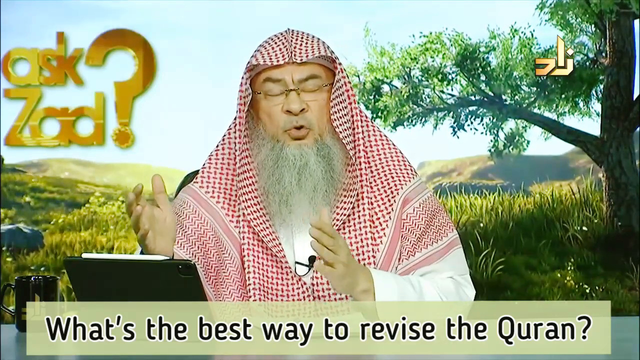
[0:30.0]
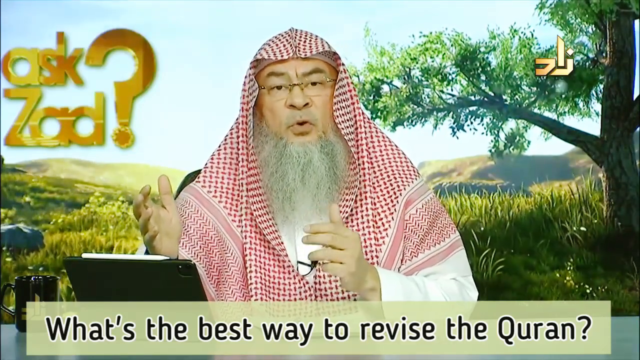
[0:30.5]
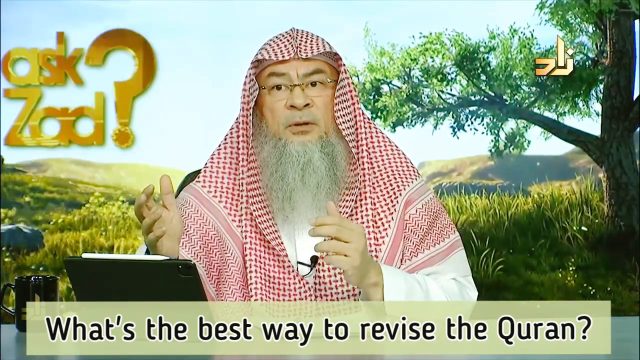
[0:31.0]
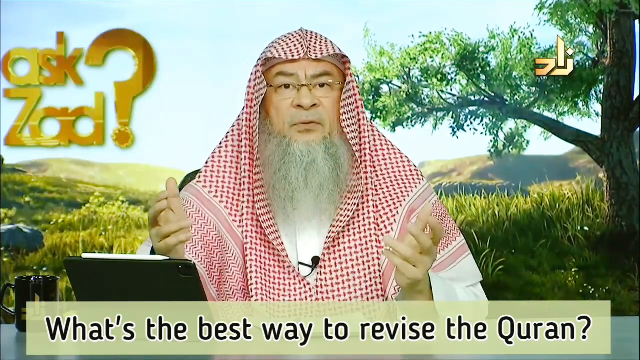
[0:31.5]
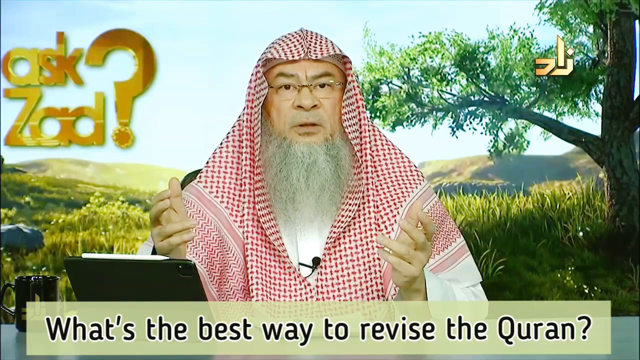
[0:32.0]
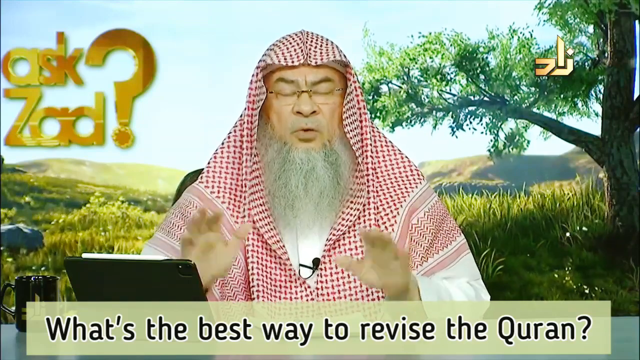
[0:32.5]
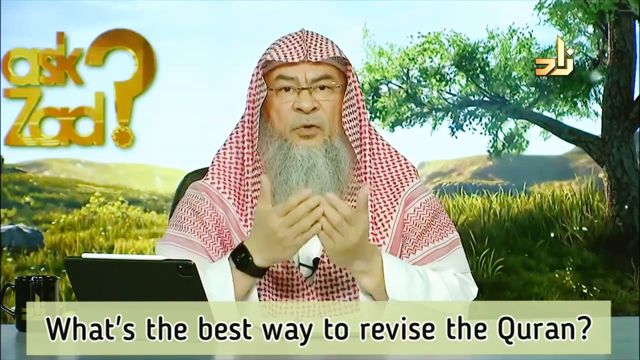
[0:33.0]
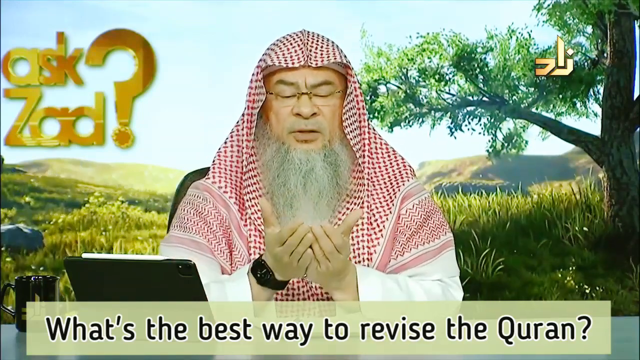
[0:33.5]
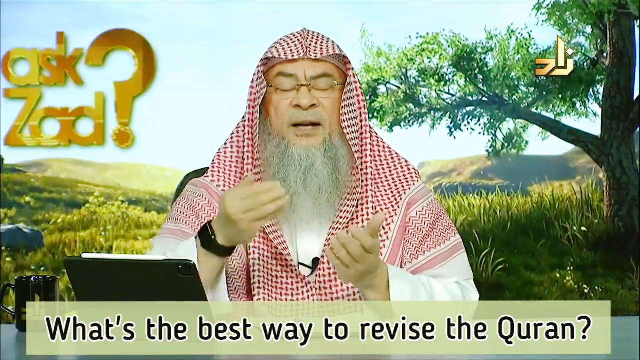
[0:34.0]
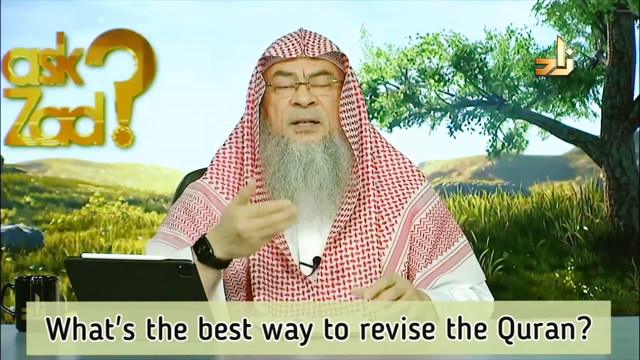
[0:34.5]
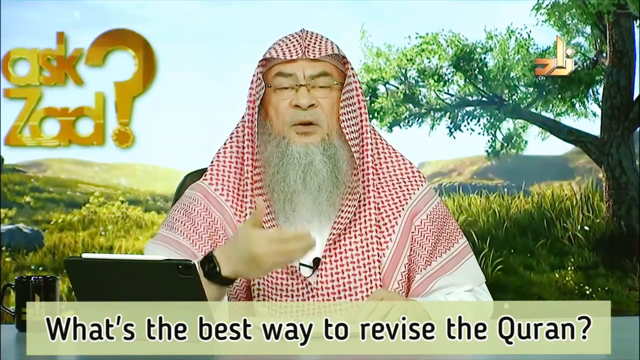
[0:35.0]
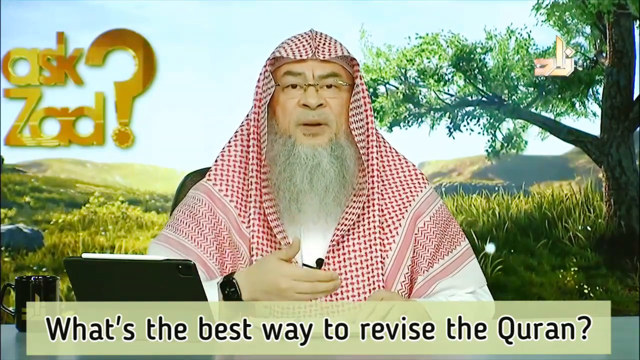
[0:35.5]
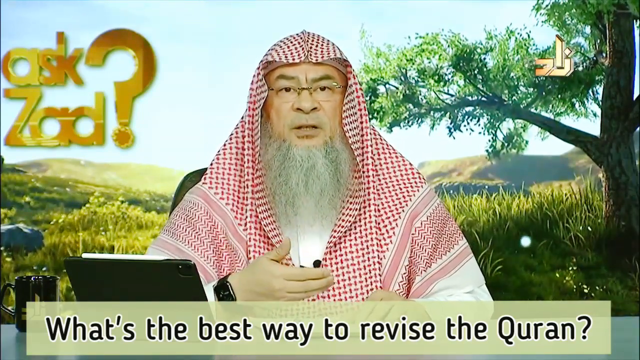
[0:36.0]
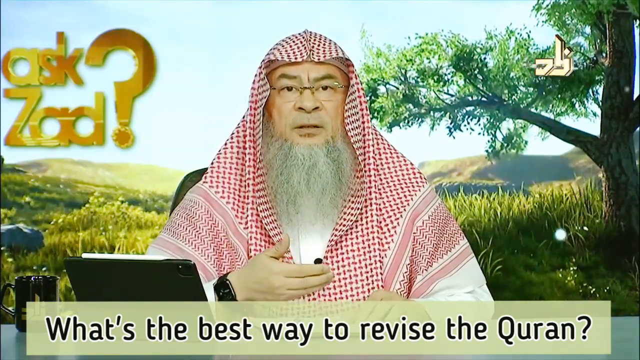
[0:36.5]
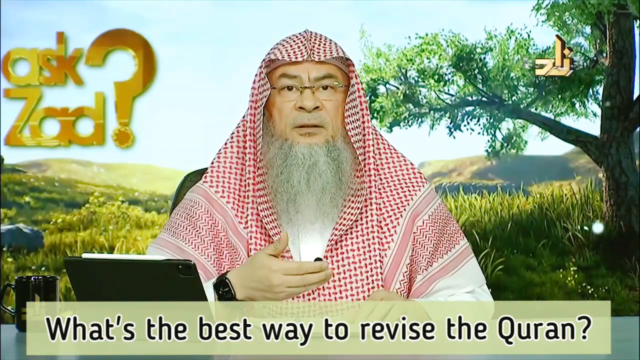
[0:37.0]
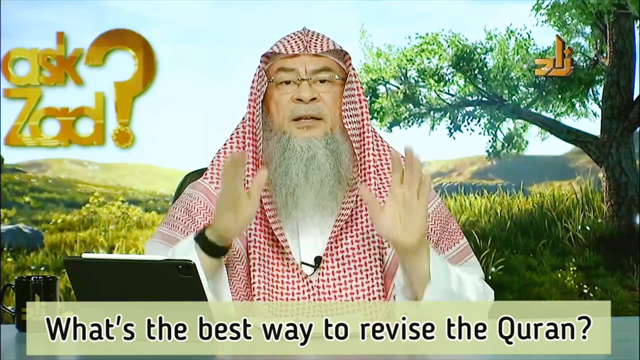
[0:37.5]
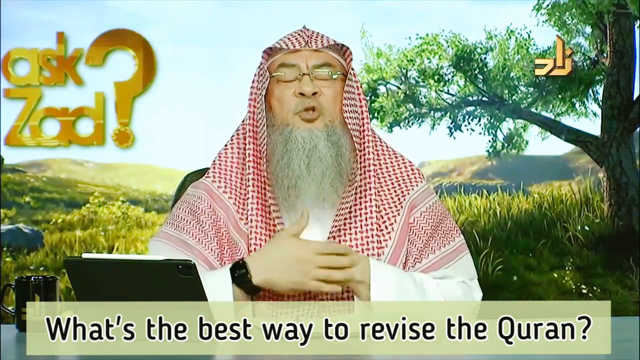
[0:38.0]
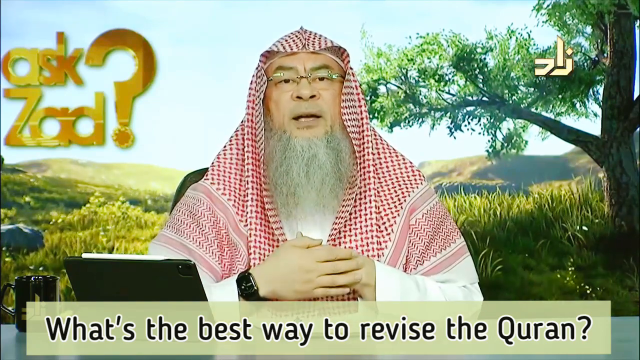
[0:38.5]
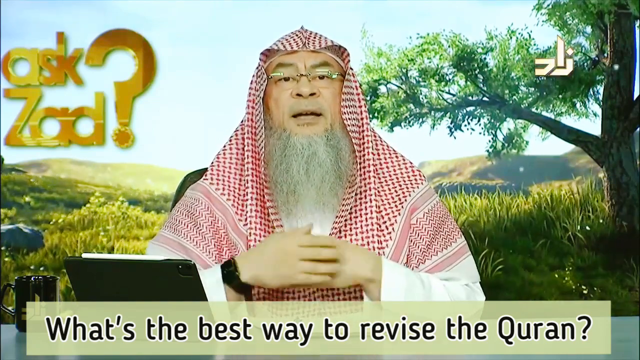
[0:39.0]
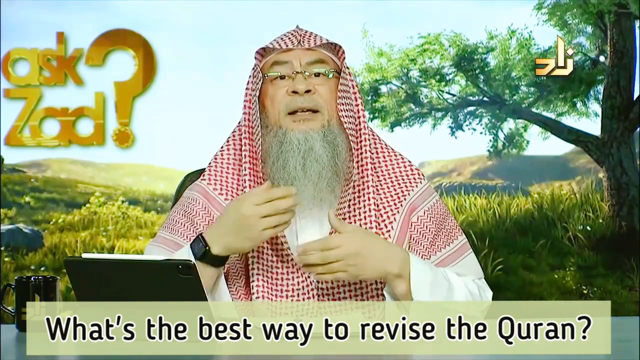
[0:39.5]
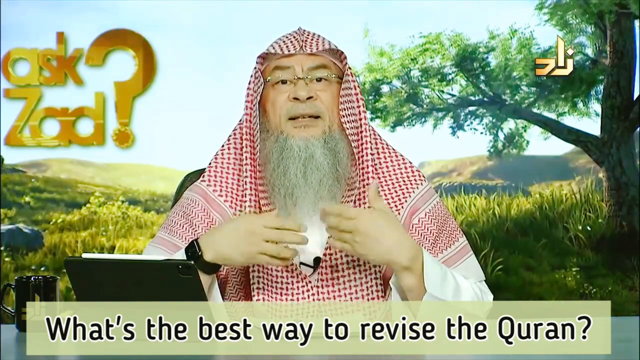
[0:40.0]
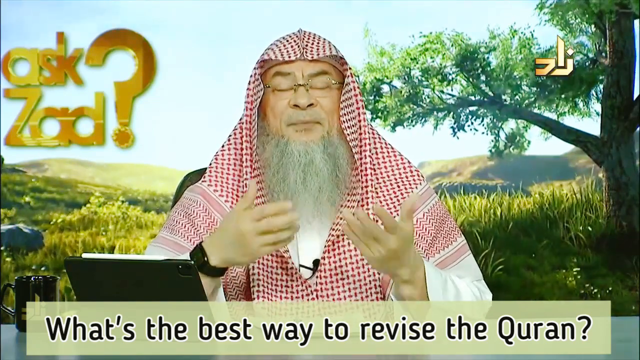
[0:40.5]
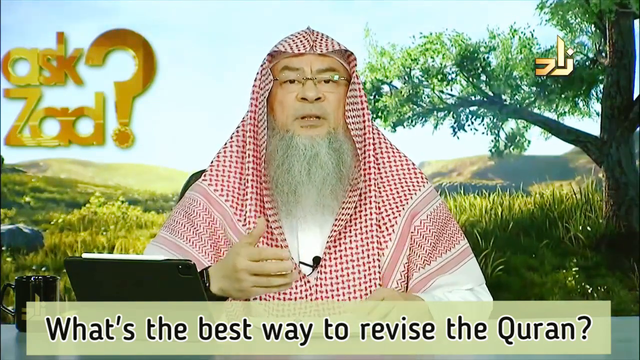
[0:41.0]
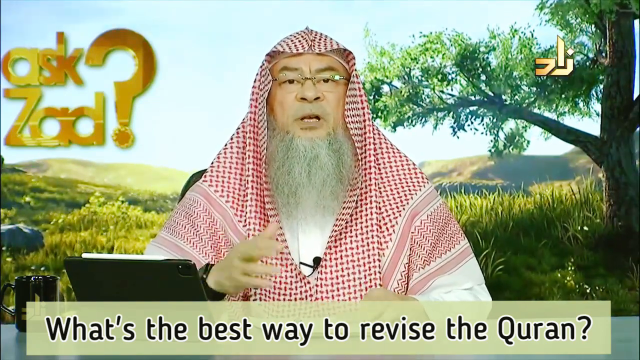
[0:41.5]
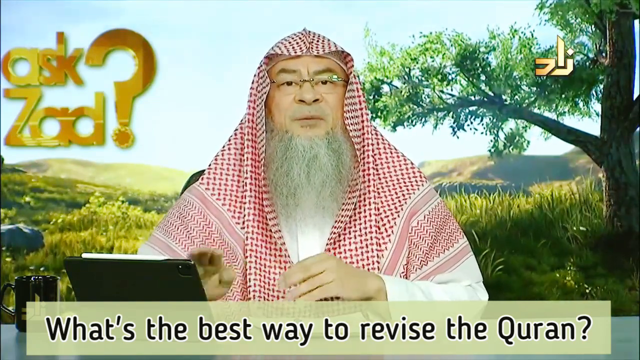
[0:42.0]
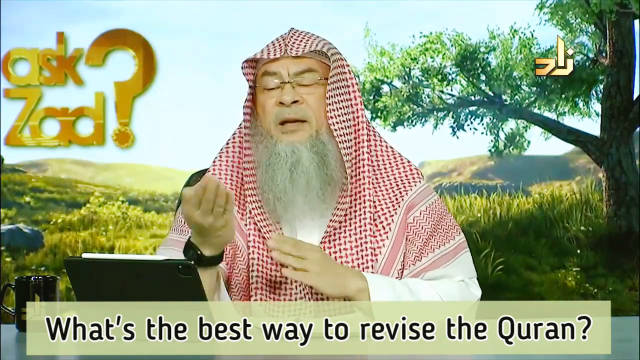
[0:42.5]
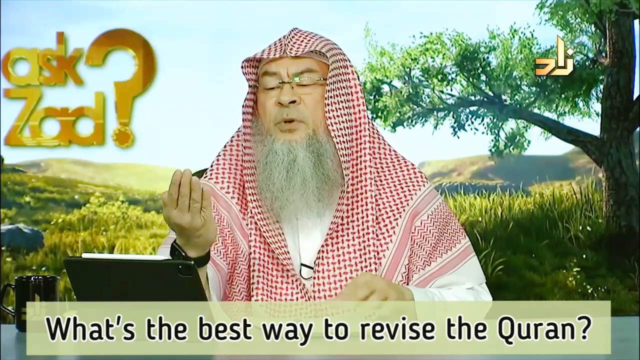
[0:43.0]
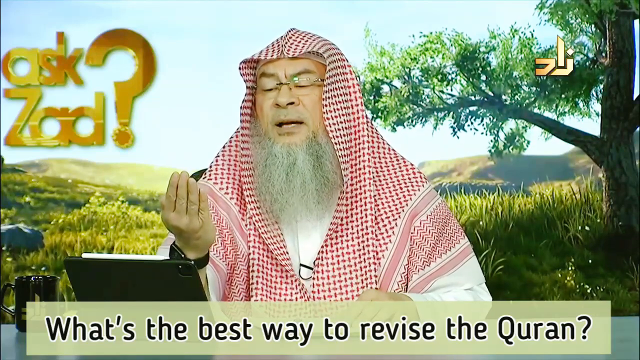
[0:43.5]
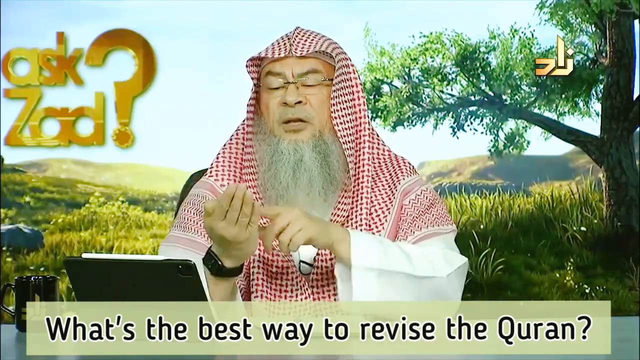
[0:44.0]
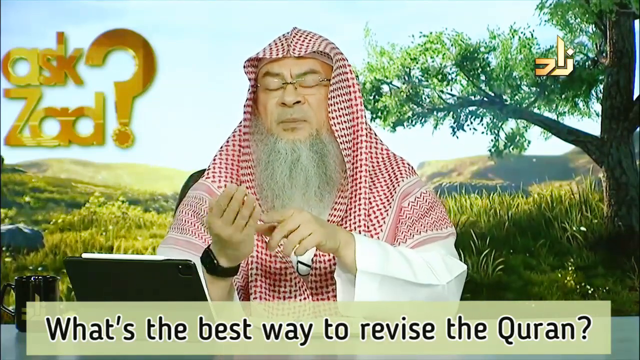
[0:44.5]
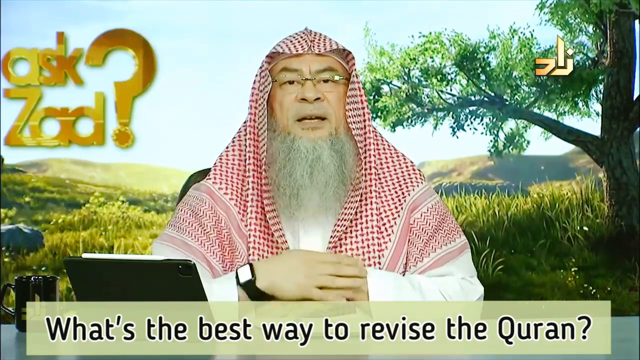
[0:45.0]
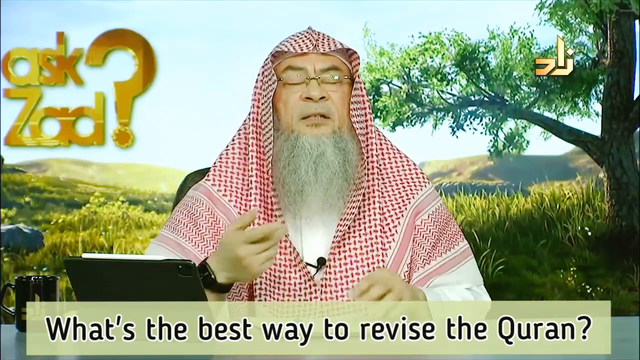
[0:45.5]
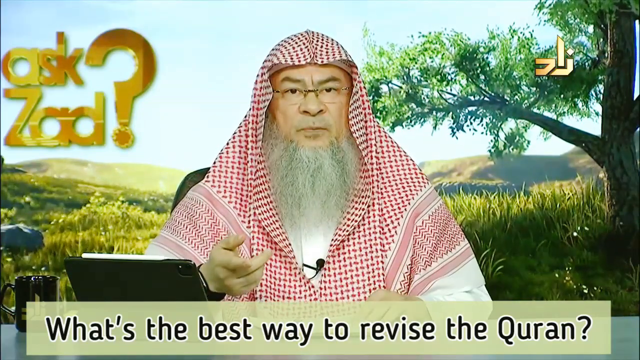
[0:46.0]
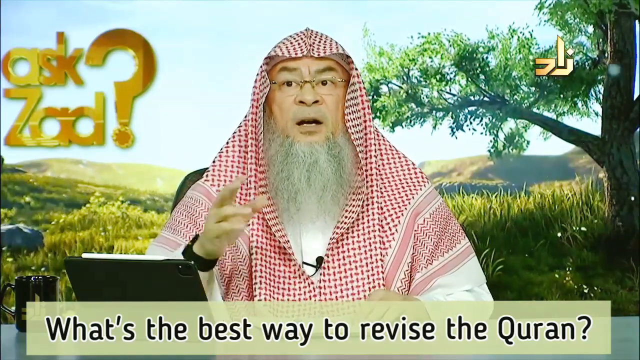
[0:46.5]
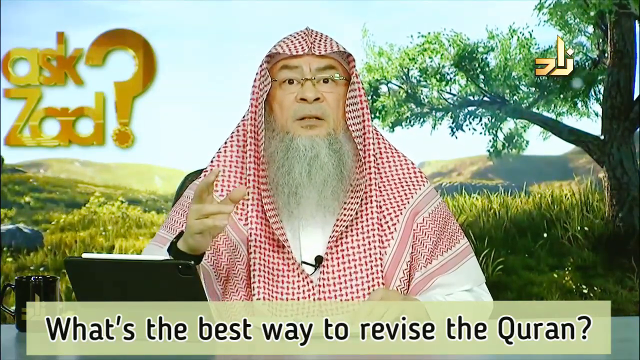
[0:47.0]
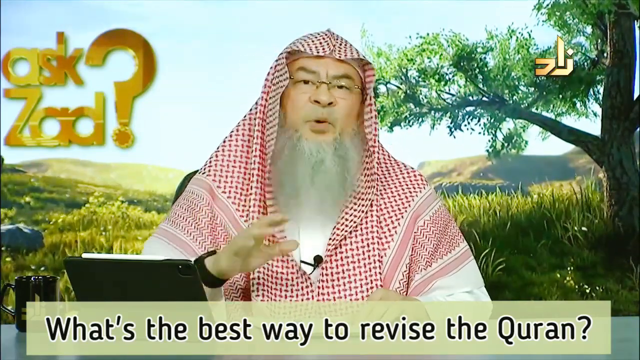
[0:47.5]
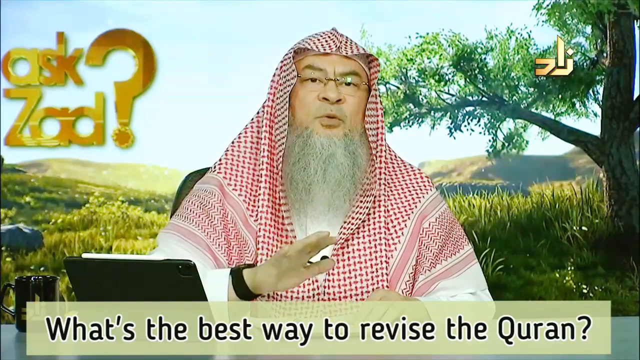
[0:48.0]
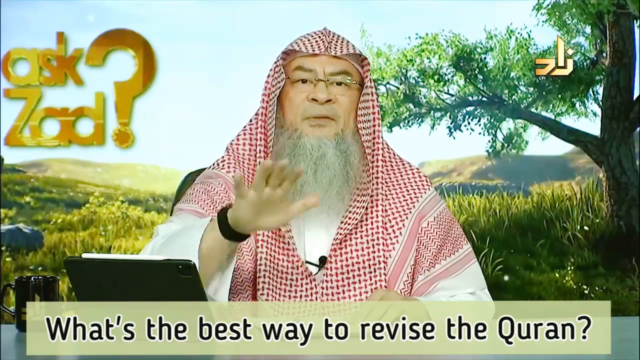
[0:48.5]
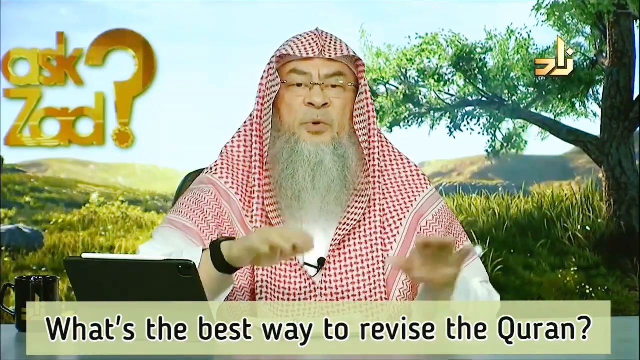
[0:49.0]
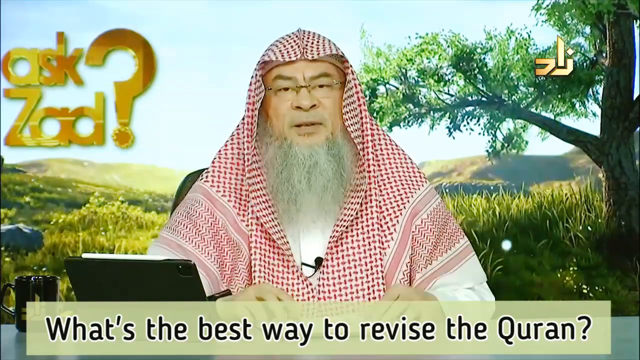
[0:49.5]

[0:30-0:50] The man continues to speak, his right hand near the iPad as he keeps gesturing. Shortly after, he brings his hands together to symbolize something meeting in the middle. His left hand moves away while his right hand continues gesturing with forward motions to make his point. He then flashes his hands up towards the camera, brings them back together towards his chest, and does a rolling movement with his hands as if hurrying something. He gestures towards the camera with his right hand, and his hands move together again; he looks towards the palm of his right hand, which flashes up towards the sky and towards himself. He then uses his left hand to motion towards his right palm, brings both hands flat to his chest, and then uses his right hand again to speak and gesture.